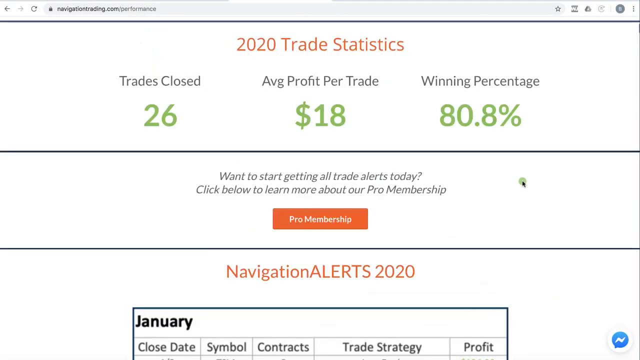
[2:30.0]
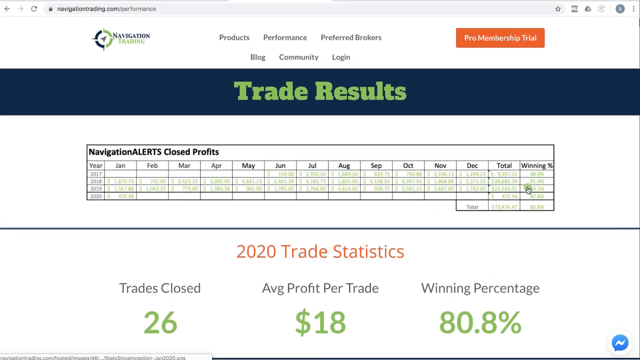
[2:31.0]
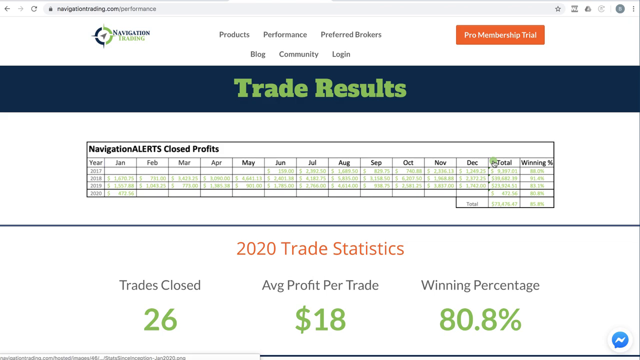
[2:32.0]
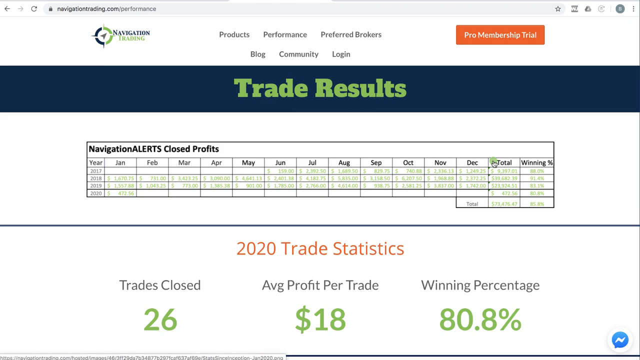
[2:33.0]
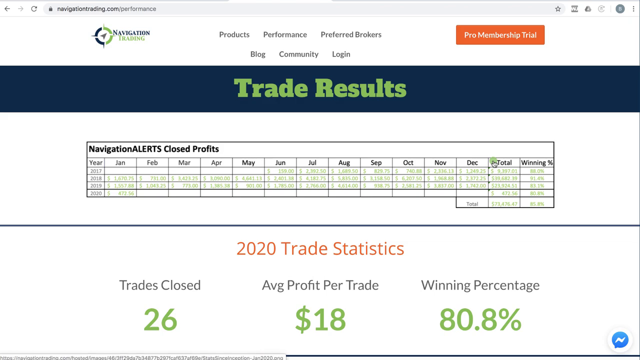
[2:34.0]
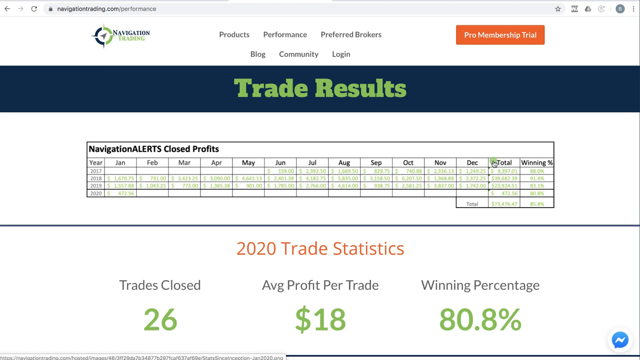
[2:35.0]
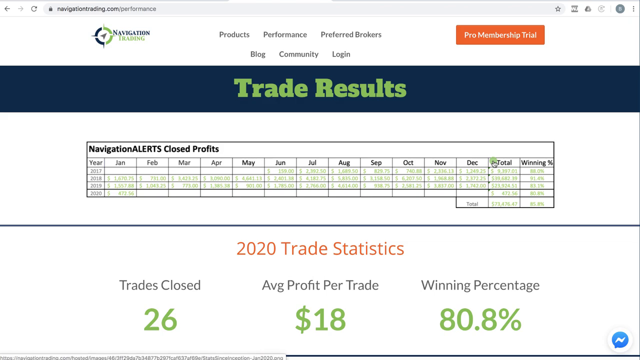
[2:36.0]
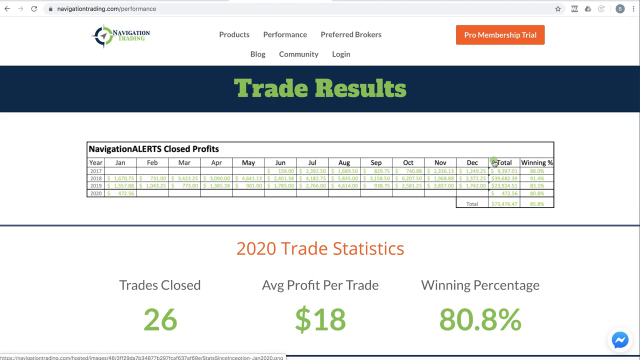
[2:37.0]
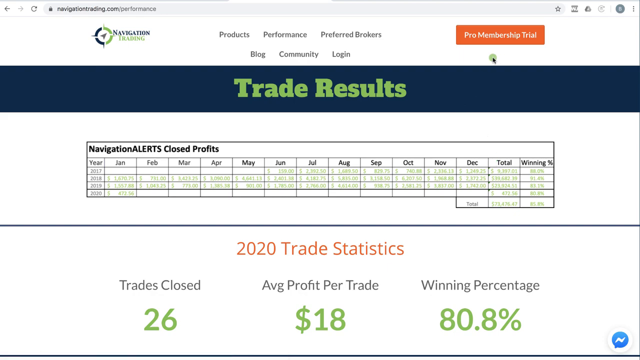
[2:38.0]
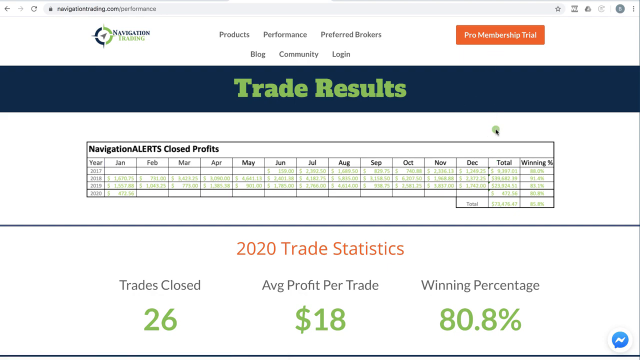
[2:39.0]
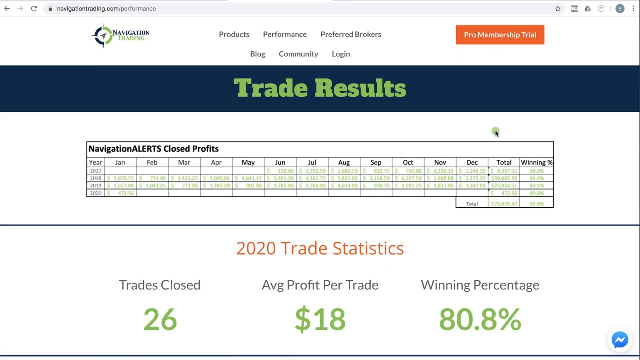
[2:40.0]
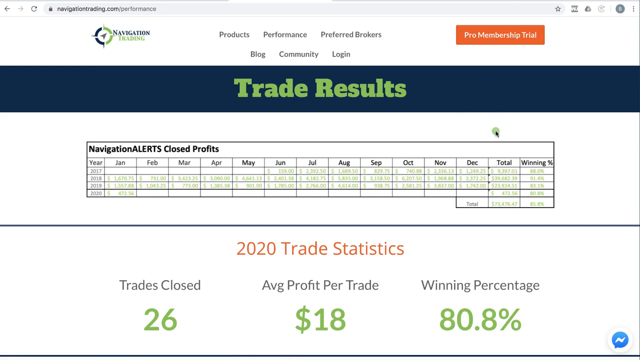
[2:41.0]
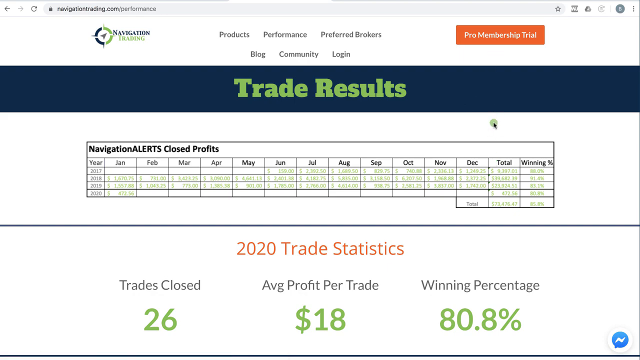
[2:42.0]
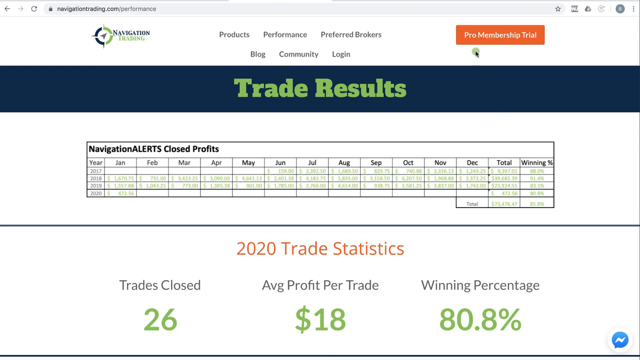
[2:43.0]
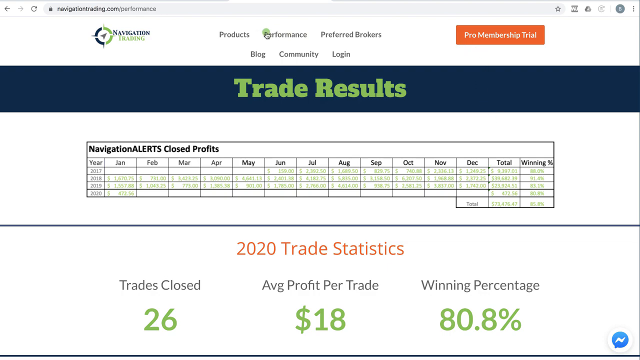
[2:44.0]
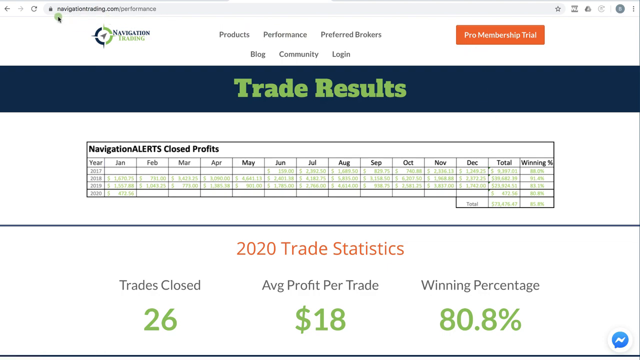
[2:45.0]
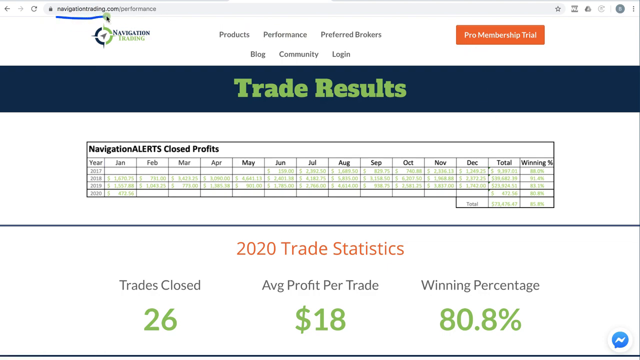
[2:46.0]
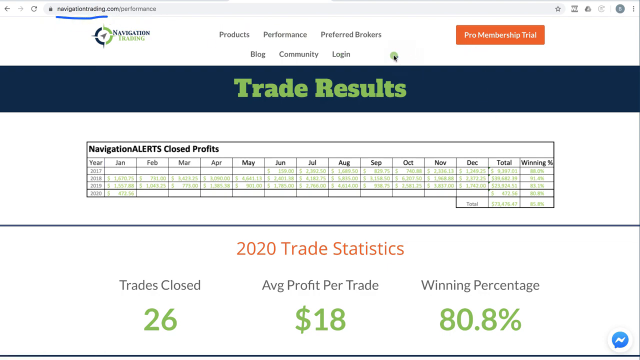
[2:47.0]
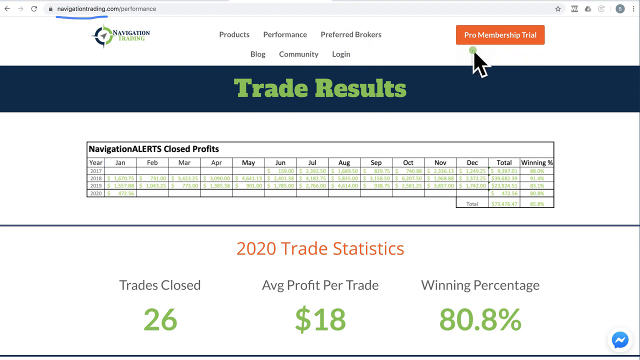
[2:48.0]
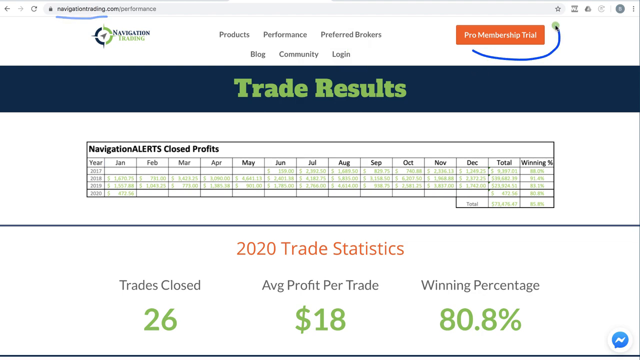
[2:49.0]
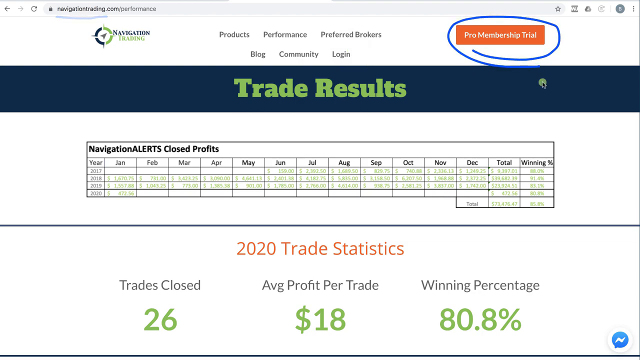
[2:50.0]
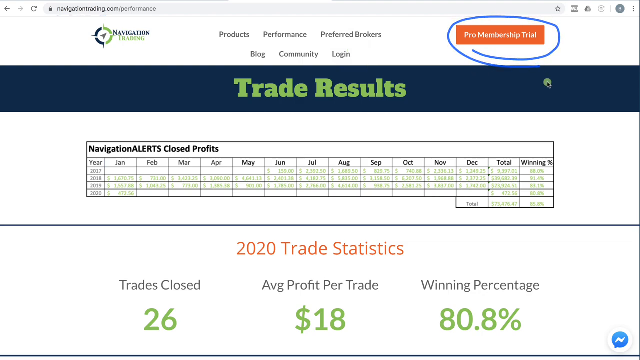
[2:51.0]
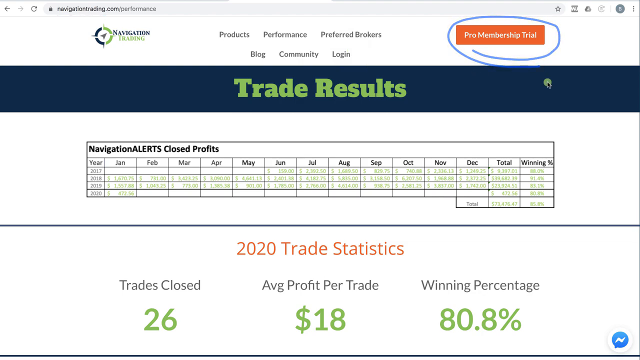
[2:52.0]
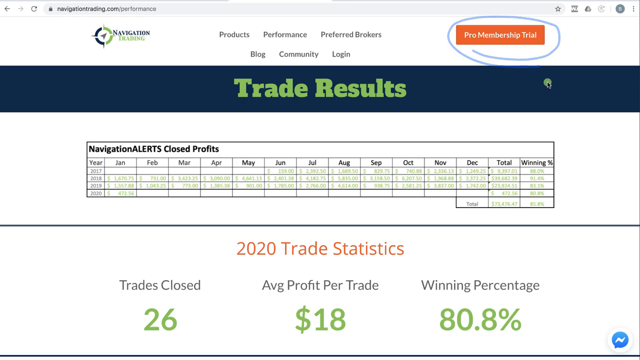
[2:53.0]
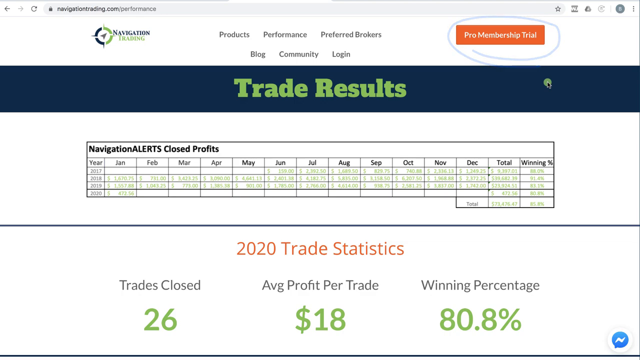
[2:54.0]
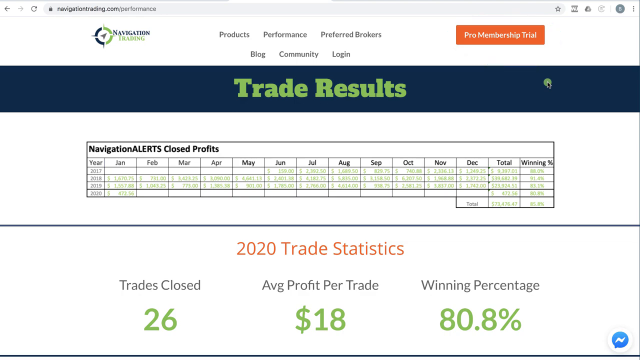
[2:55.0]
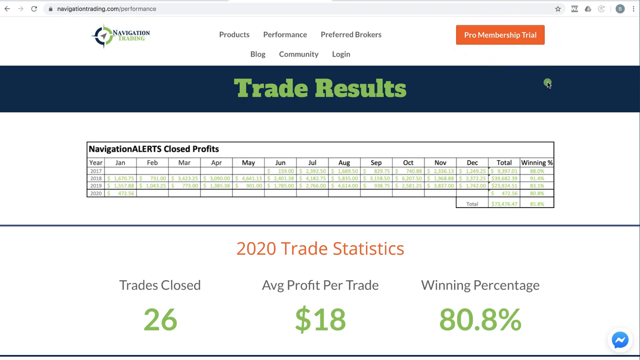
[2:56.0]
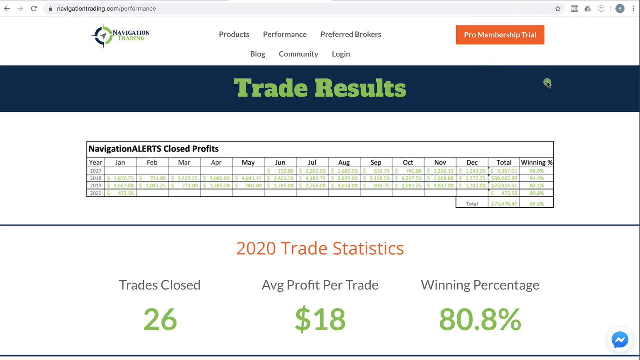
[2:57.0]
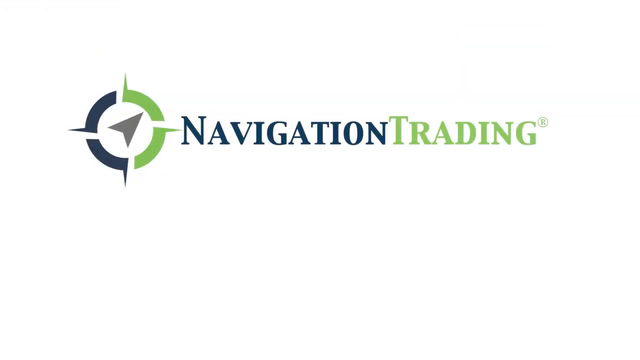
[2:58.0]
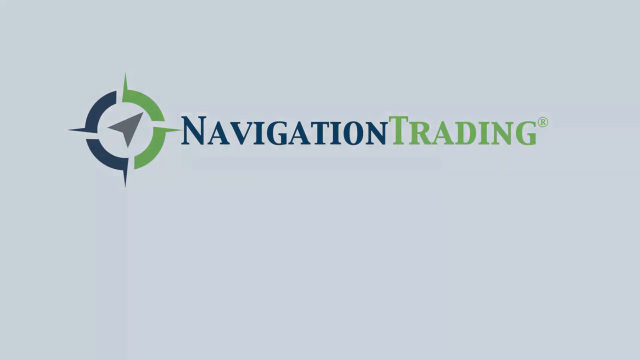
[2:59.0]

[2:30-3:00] A settings area shows trade results, including average profit per trade, winning percentage and trades posted. The app also shows text mentioning a trial and subscription levels.